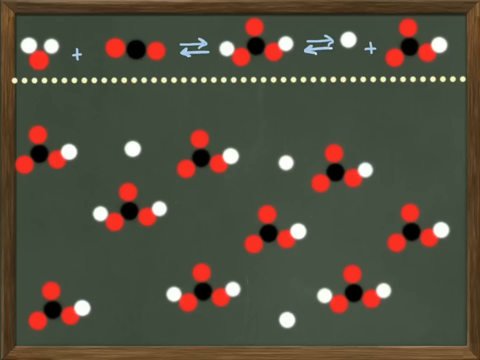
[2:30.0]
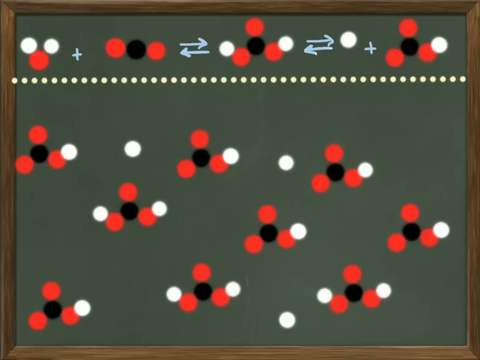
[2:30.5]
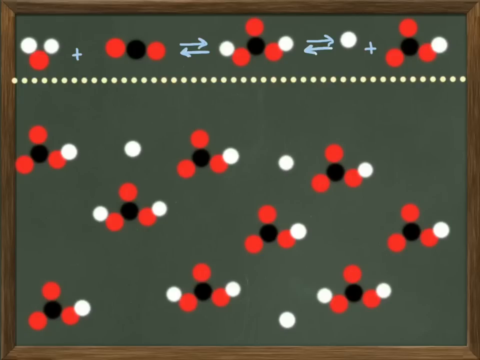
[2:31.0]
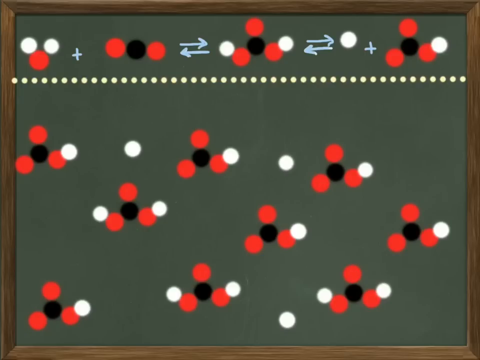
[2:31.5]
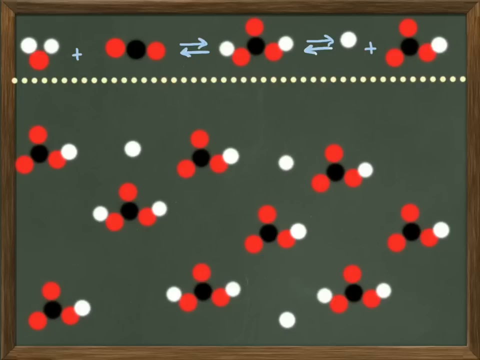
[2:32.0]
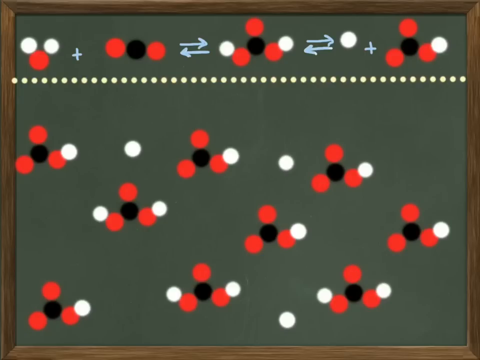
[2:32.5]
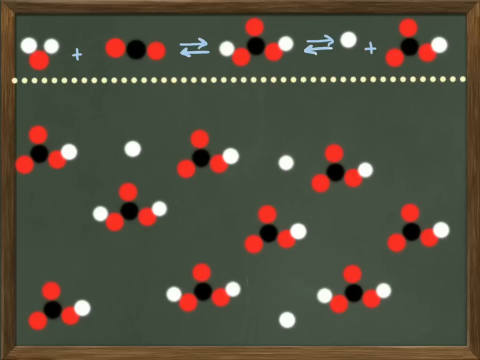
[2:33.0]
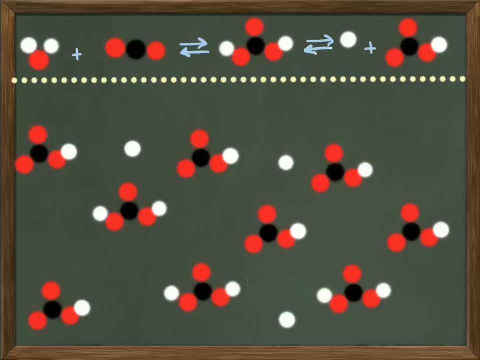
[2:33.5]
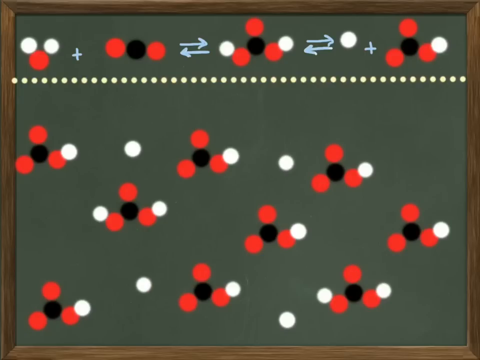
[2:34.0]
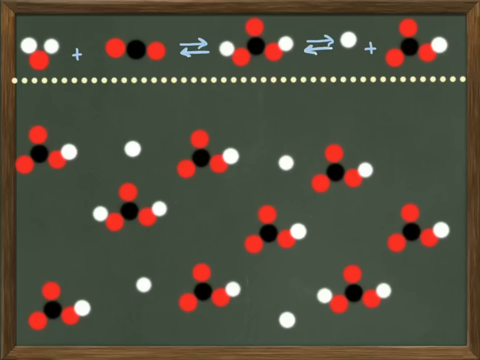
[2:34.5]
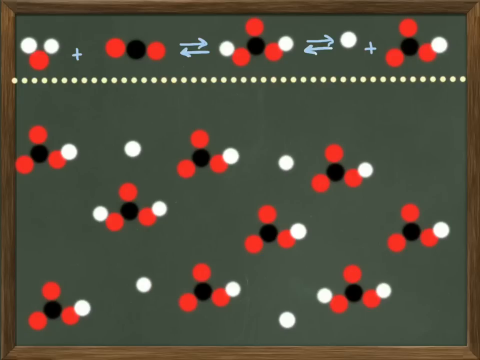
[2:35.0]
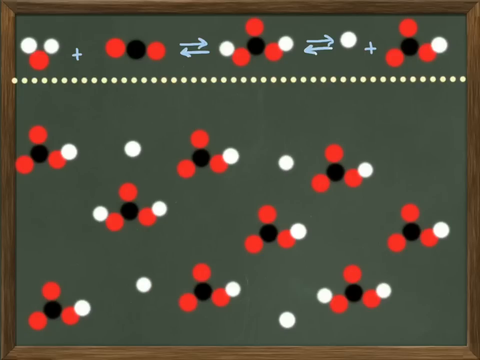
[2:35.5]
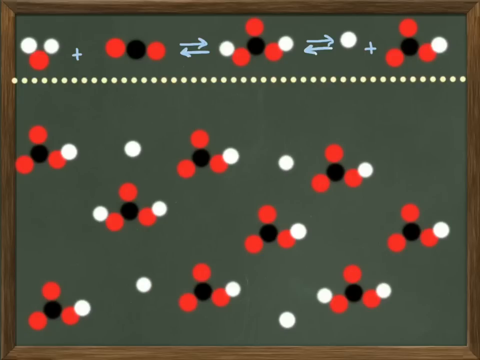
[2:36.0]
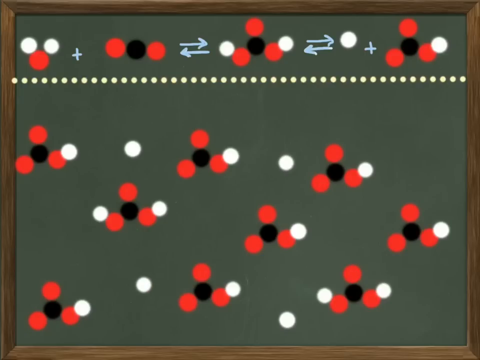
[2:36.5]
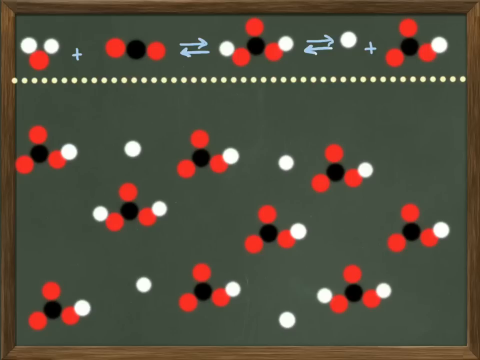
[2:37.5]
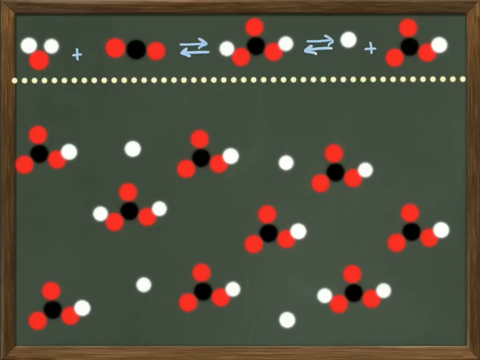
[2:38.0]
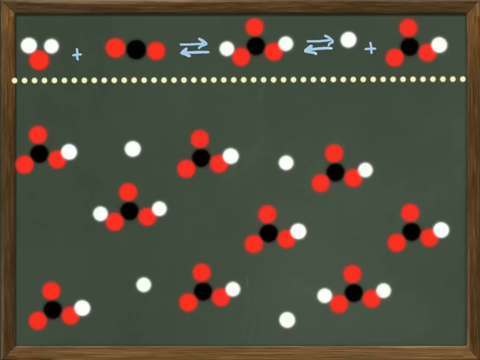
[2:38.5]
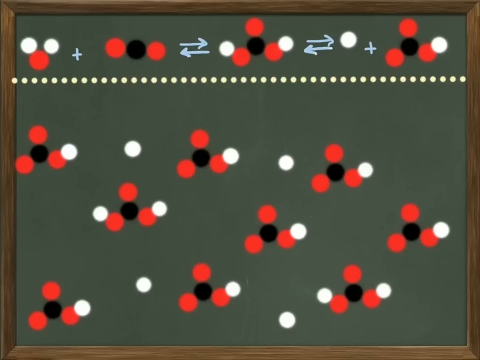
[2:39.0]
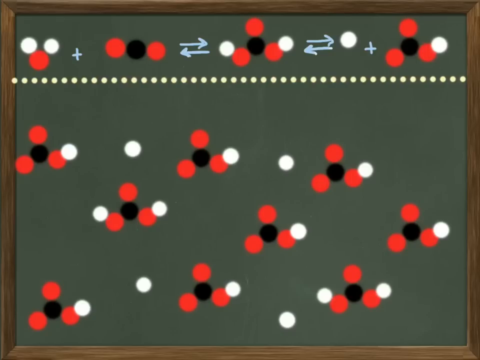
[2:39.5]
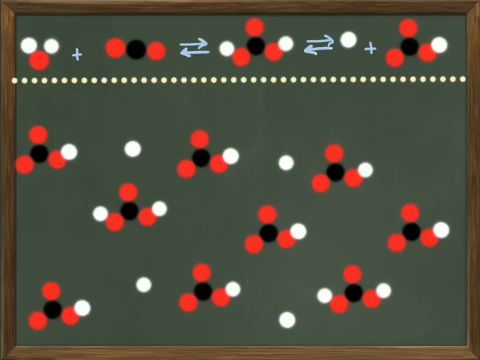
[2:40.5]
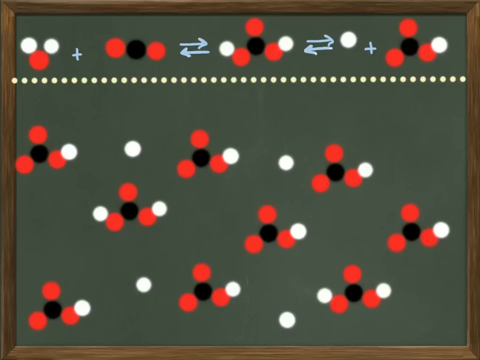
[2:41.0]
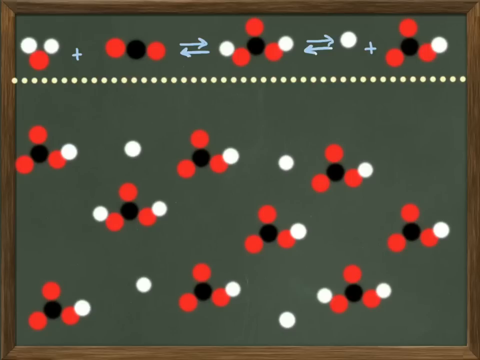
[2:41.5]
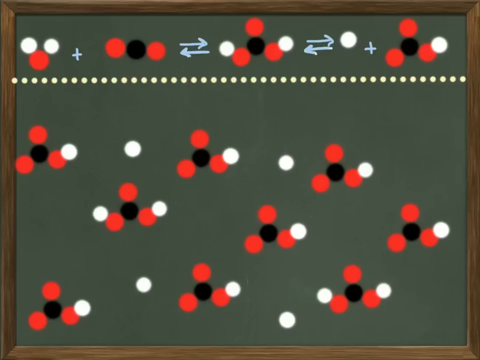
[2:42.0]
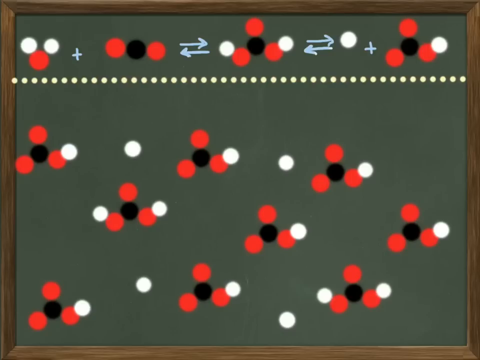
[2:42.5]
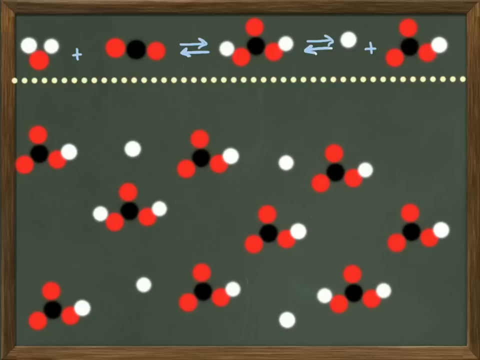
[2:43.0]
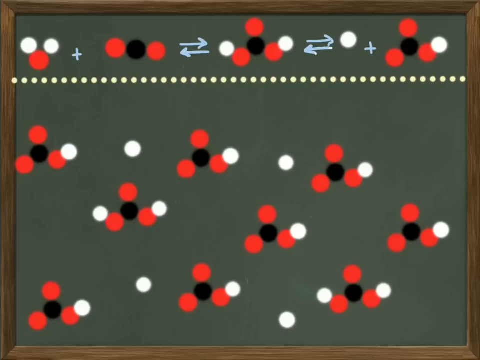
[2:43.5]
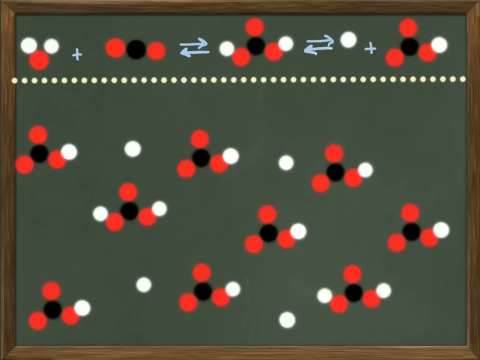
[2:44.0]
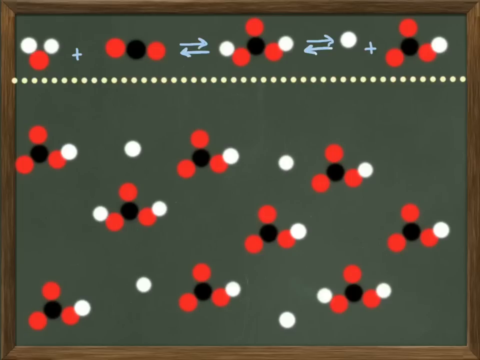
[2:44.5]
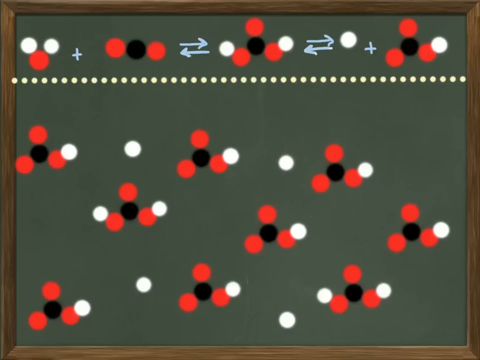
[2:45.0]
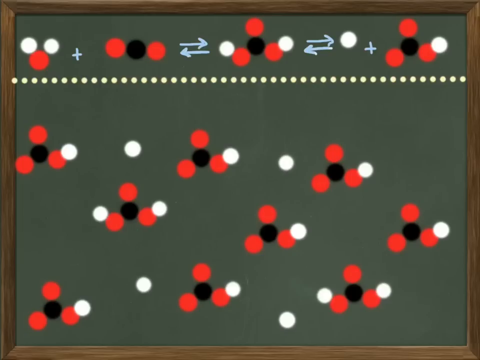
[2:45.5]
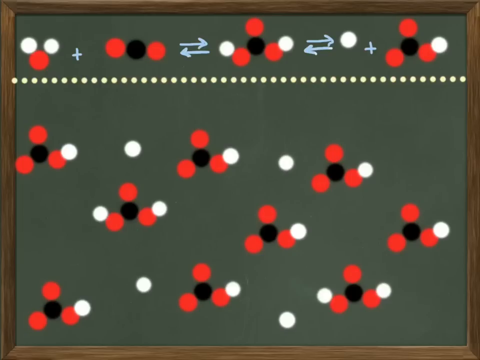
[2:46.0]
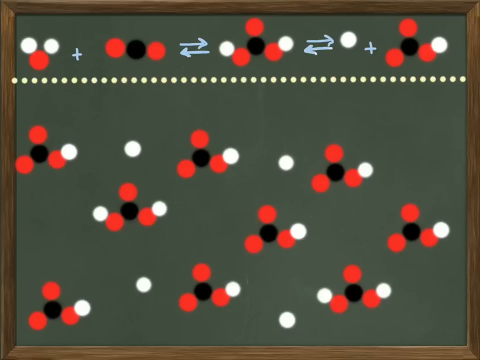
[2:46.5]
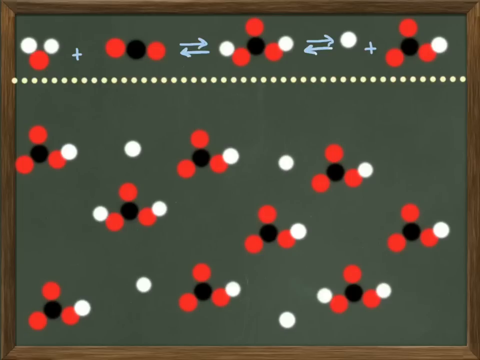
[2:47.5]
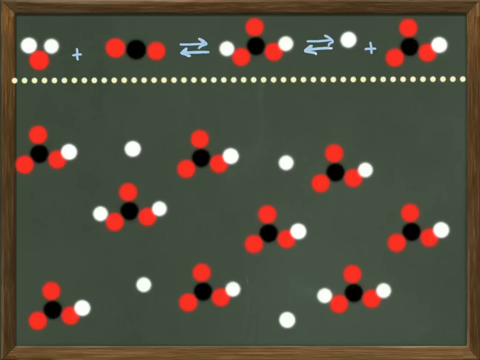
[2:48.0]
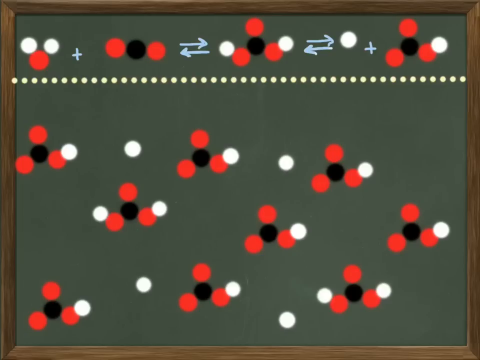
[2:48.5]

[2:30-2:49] The equation is on the board with many particles, including oxygen, and lots of red, white and black dots. There are many equations, and there seems to be a lot of mismatching. One of the white dots is moved from its original group and placed in the middle of it. The board is very green and looks like it is a whiteboard. The equations look very busy.